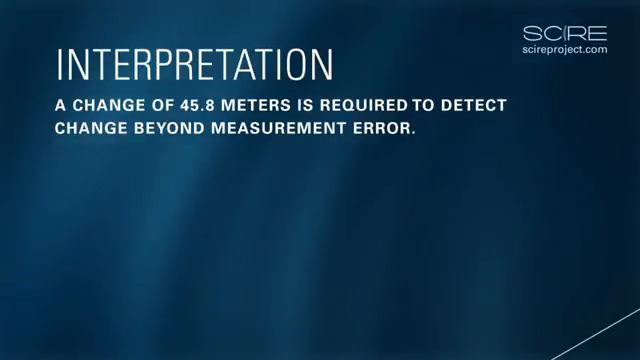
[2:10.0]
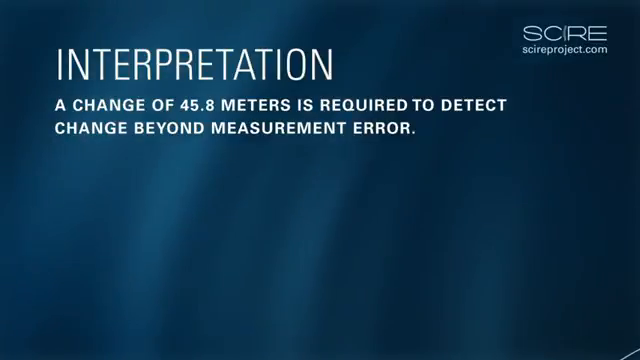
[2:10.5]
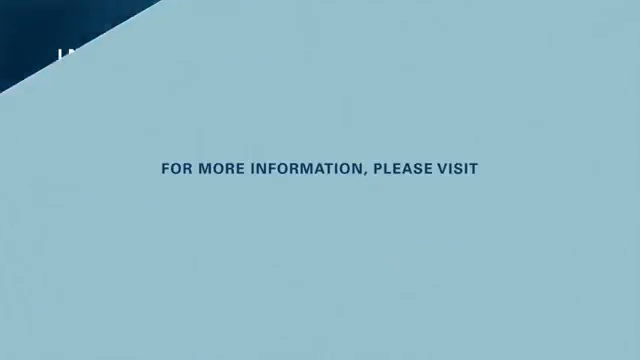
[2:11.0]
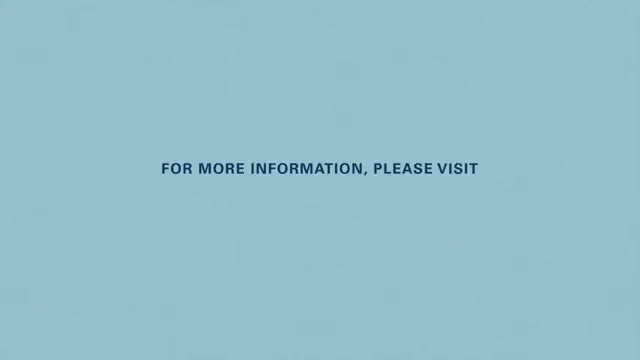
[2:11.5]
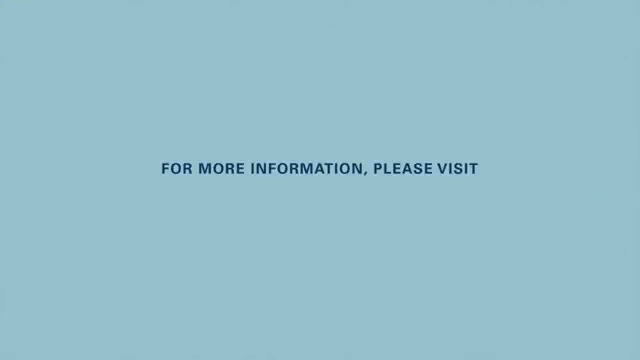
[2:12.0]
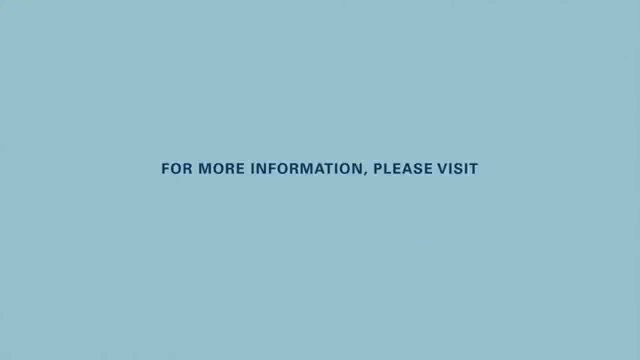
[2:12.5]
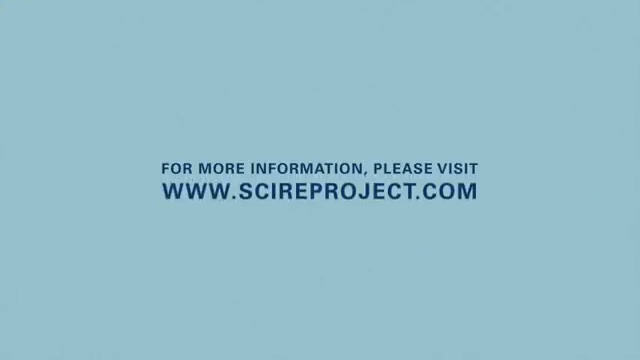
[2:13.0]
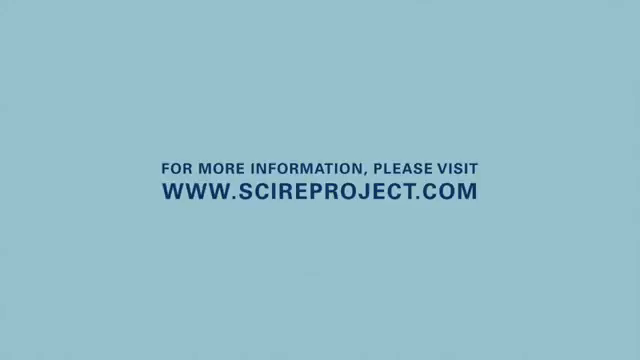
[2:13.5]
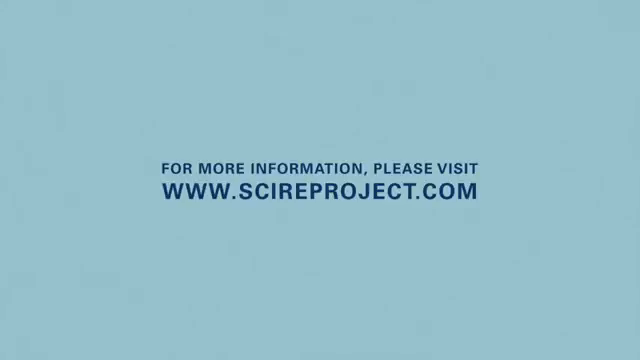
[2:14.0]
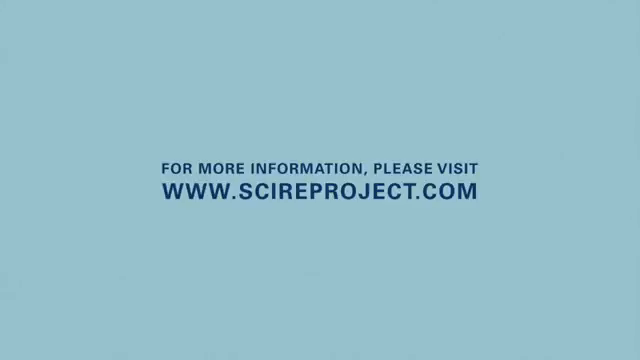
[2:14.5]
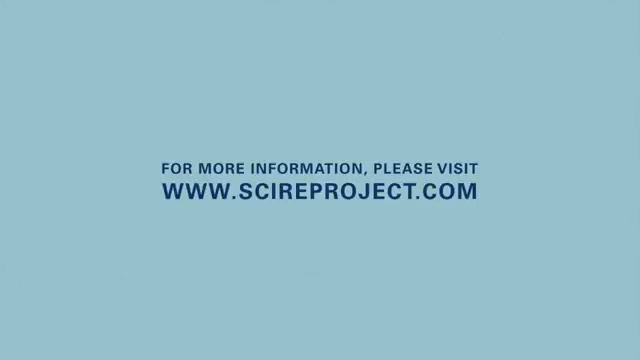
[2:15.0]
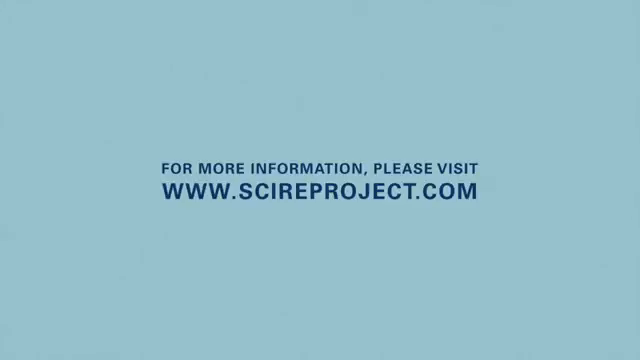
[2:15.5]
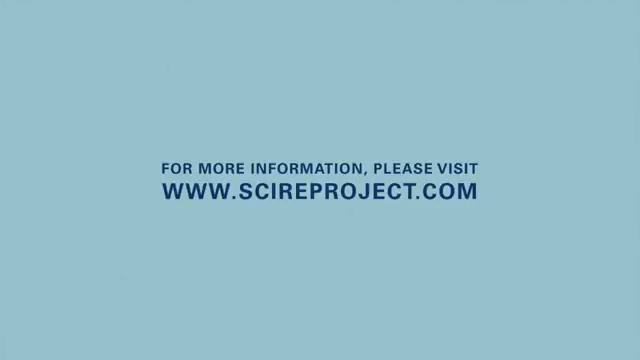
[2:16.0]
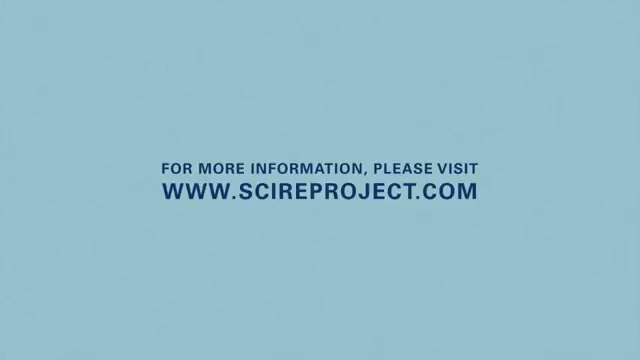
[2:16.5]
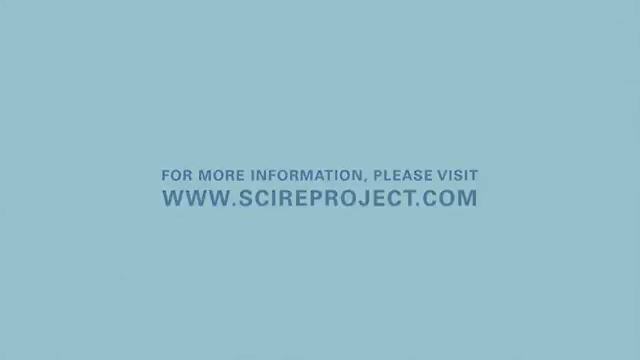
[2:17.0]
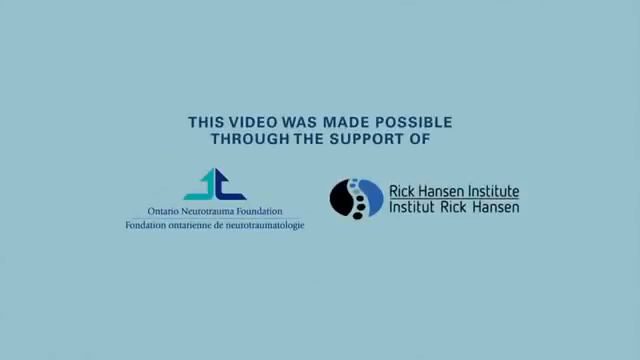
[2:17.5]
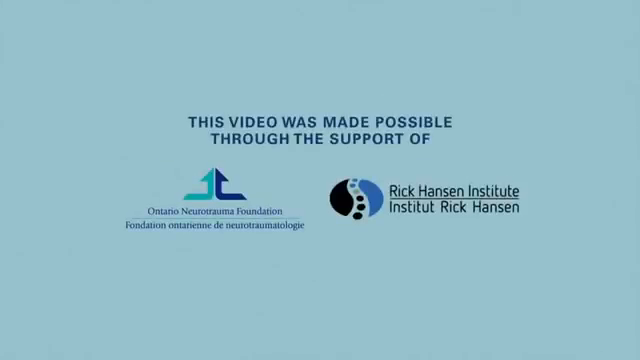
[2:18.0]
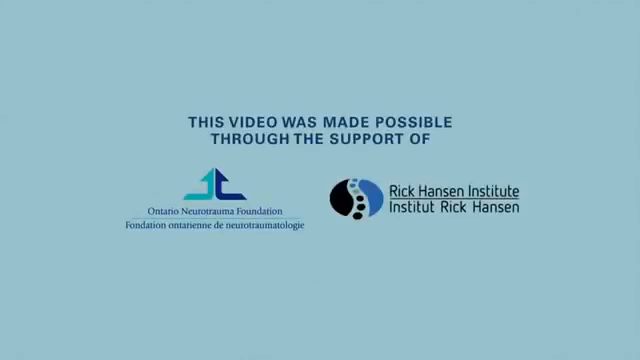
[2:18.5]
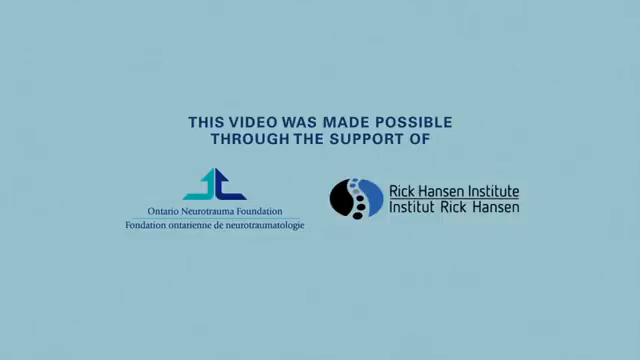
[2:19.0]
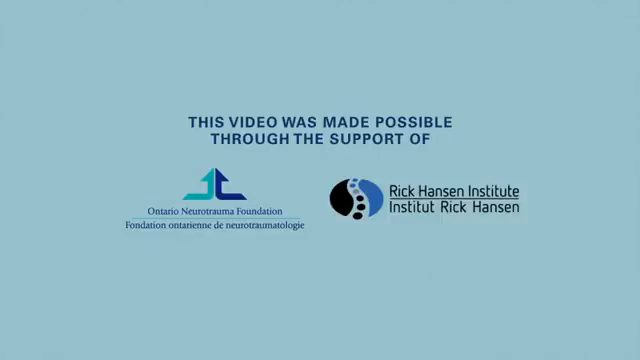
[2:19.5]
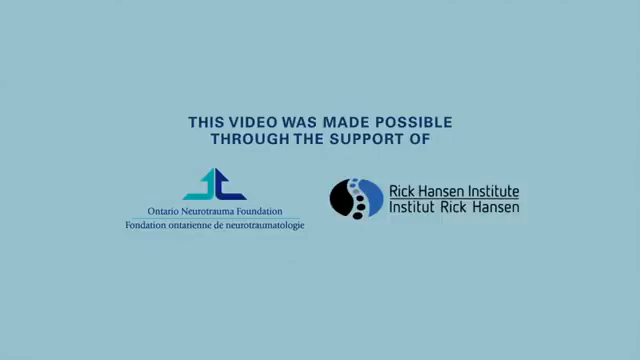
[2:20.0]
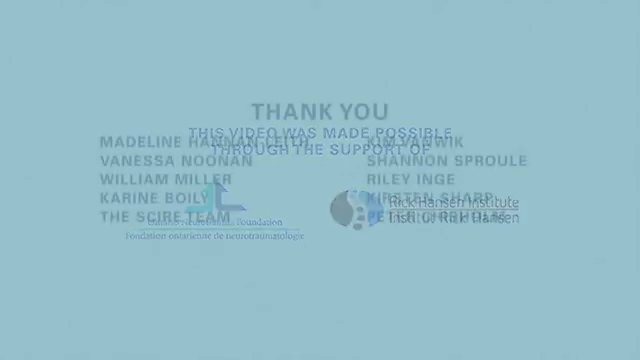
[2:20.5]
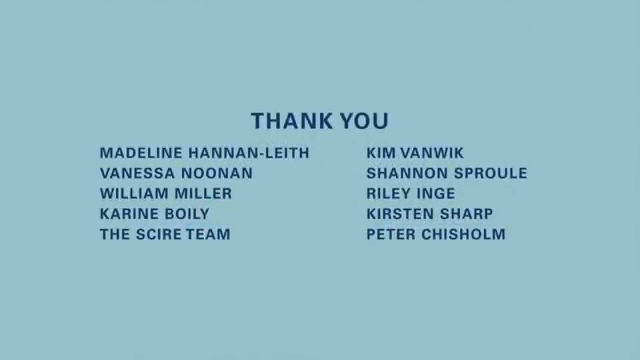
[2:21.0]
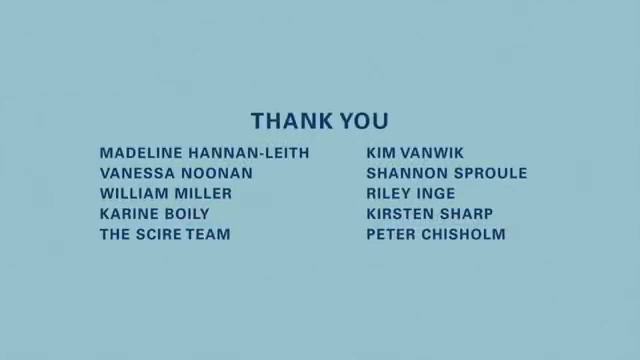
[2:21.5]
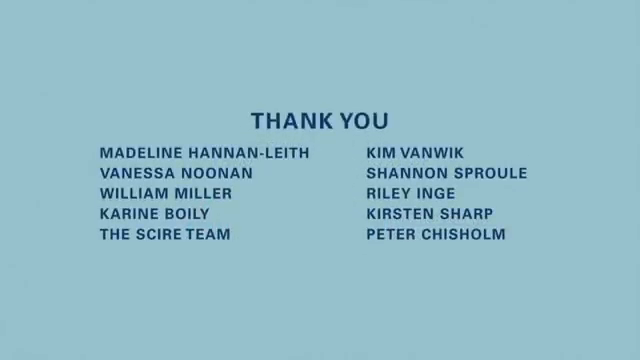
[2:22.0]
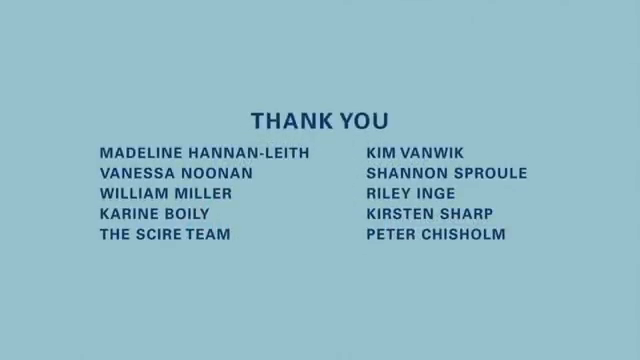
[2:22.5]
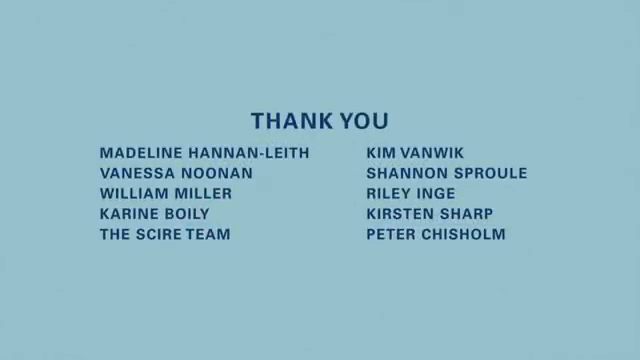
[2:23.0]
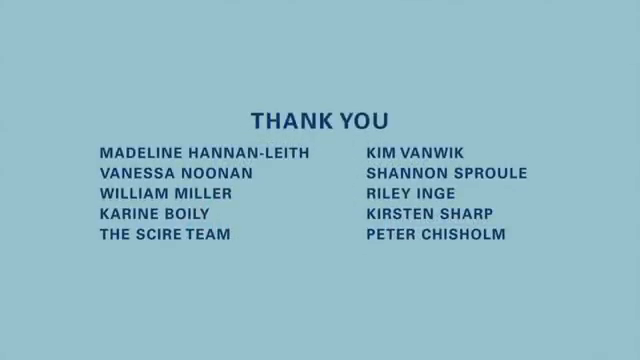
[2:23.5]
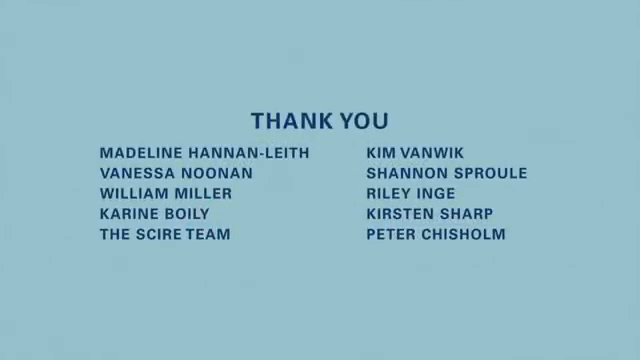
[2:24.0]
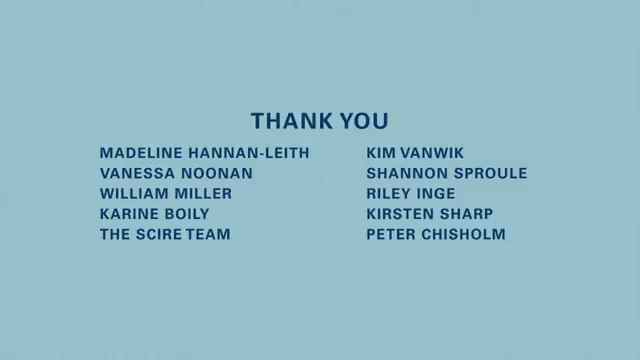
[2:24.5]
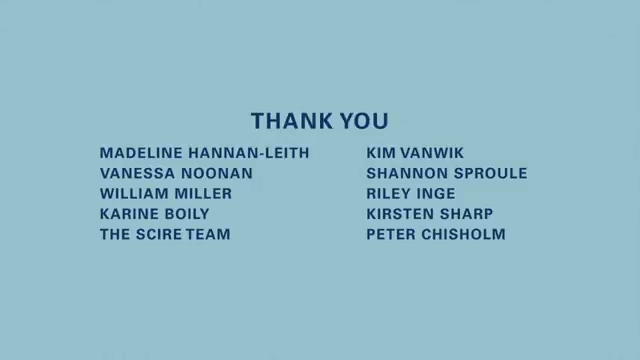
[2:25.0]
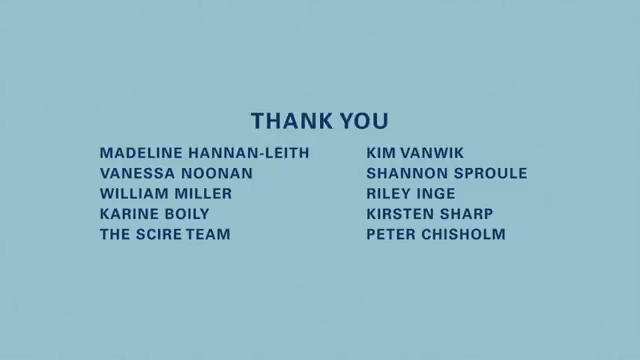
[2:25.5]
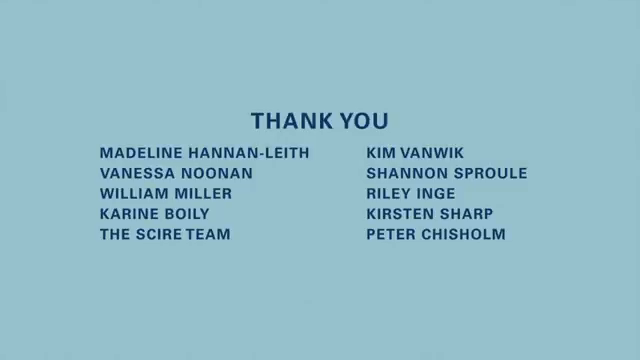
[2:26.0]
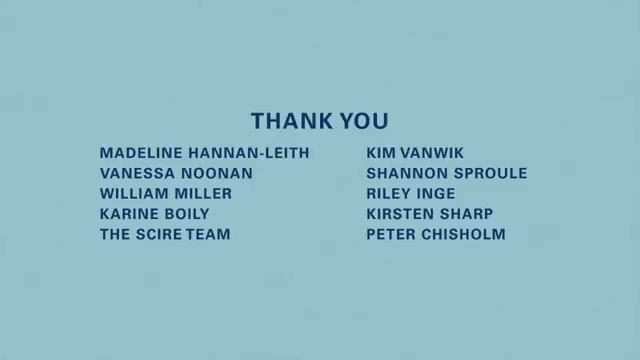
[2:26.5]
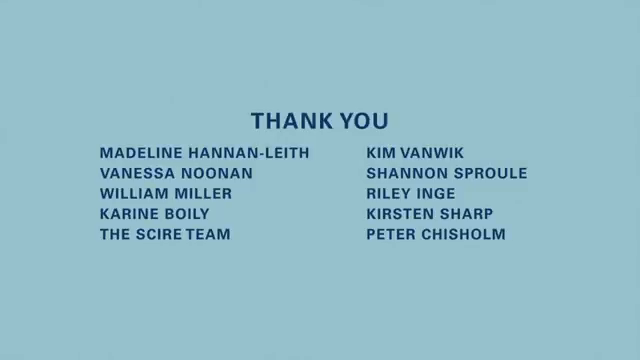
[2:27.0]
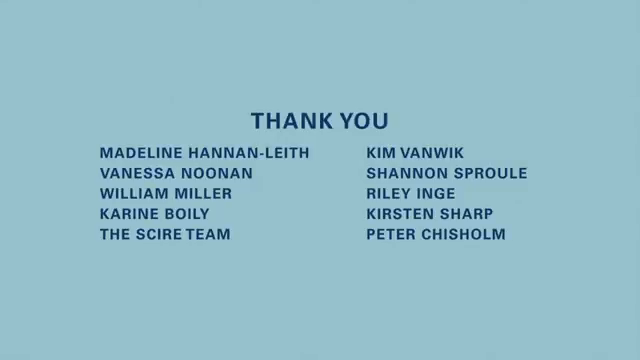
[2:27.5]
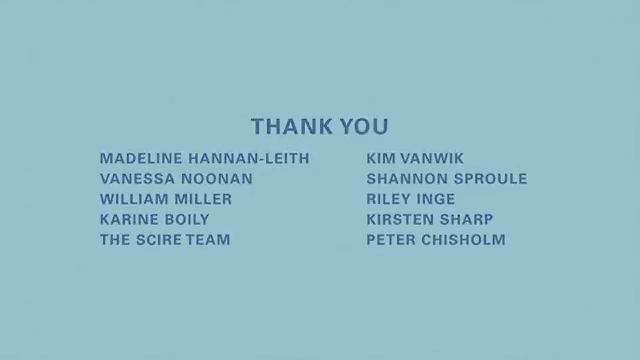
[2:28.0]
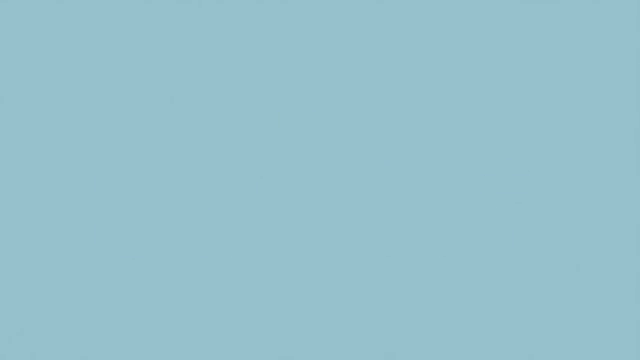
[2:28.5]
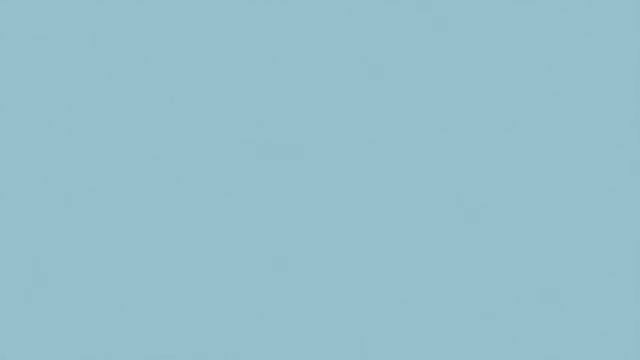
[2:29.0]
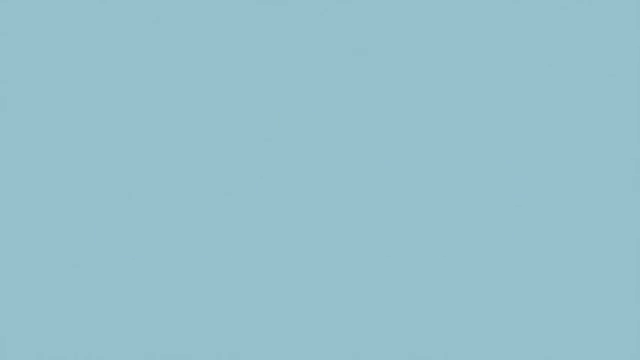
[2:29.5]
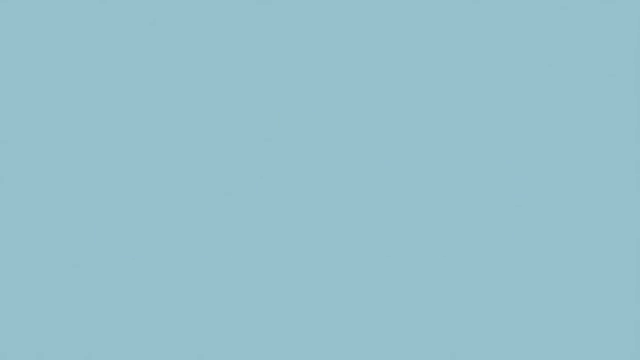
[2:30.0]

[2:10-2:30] Following the interpretation page, the background changes to a very light sky blue, and text in dark blue reads "for more information please visit www.scireproject.com". After a few seconds, the text reads "this video was made possible through the support of the Ontario Neurotrauma Foundation and the Rick Hansen Institute", with logos on screen. The Ontario Neurotrauma Foundation logo shows two arrows traveling toward each other that collide and rise up, like a mountain formed from colliding plates, making an arrow shape at the top where they meet, half light green and half dark blue. The Rick Hansen Institute logo is an incomplete circle with two sides in black and blue, and through its middle runs a line of little circles like stepping stones colored black, black, black, cream, blue, blue. The video then thanks people: "thank you to Madeline Hanaleaf, Vanessa Noonan, William Miller, Karine Boyley, Kim Vanbick, Shannon Spruill, Riley Inge, Kirsten Sharp, Peter Chisholm and the SCIRE team".